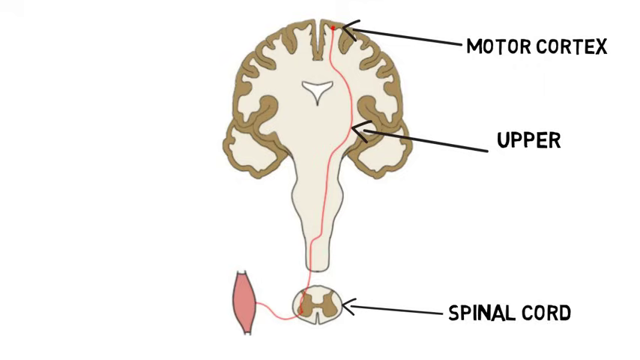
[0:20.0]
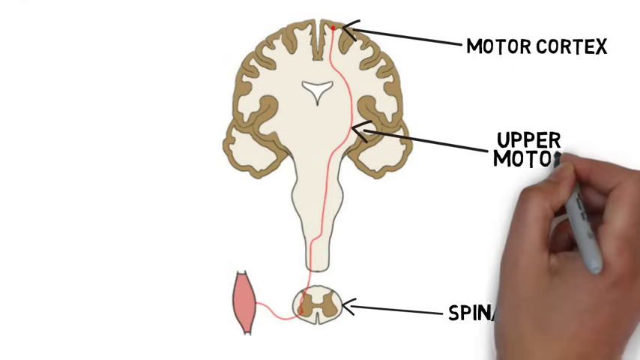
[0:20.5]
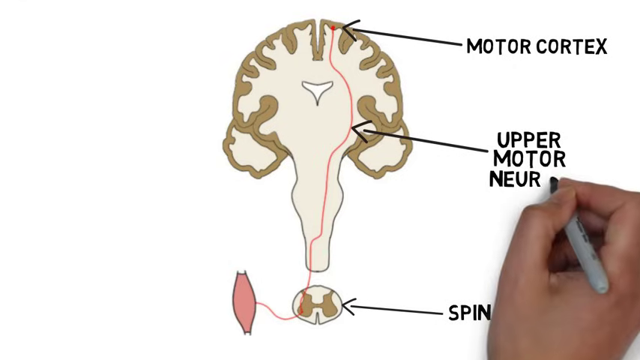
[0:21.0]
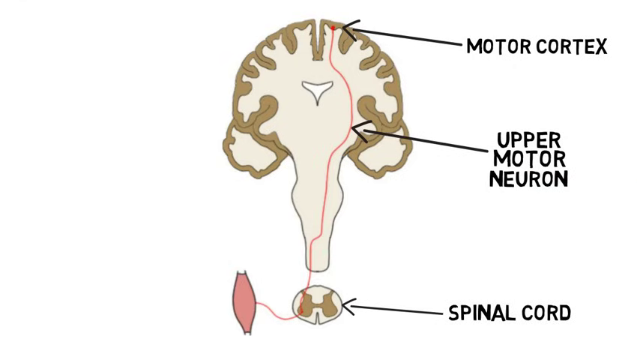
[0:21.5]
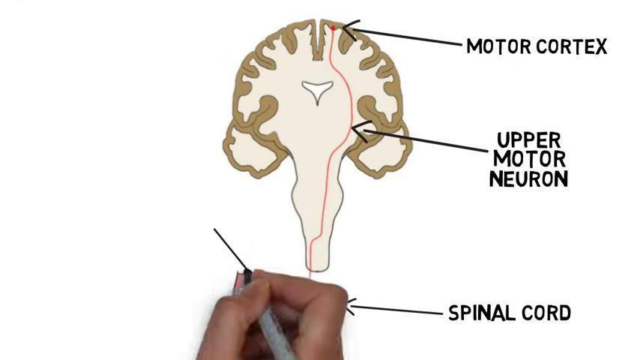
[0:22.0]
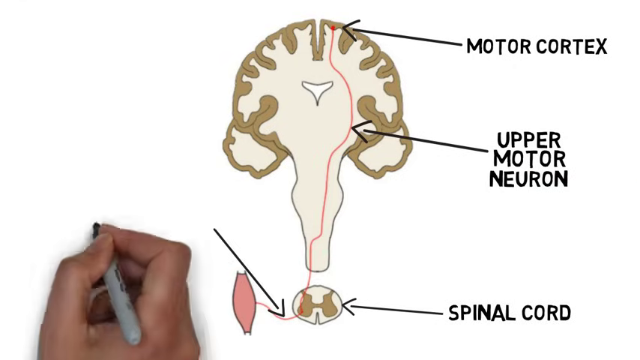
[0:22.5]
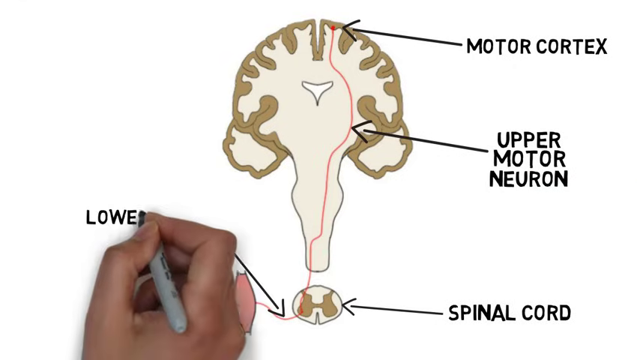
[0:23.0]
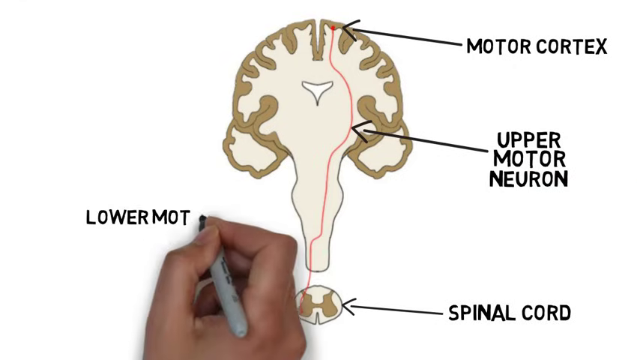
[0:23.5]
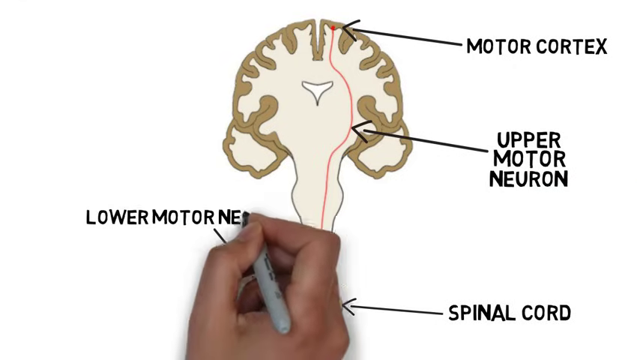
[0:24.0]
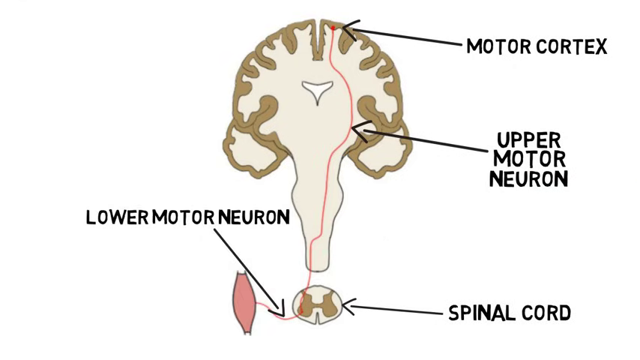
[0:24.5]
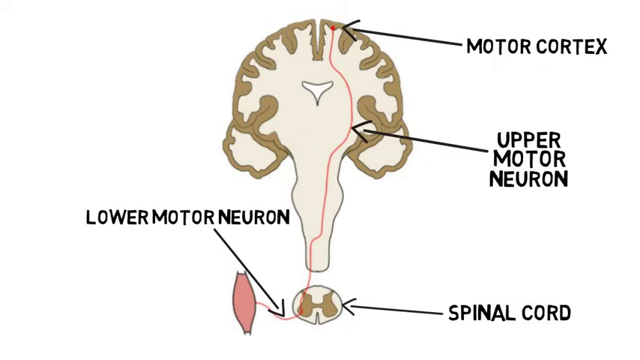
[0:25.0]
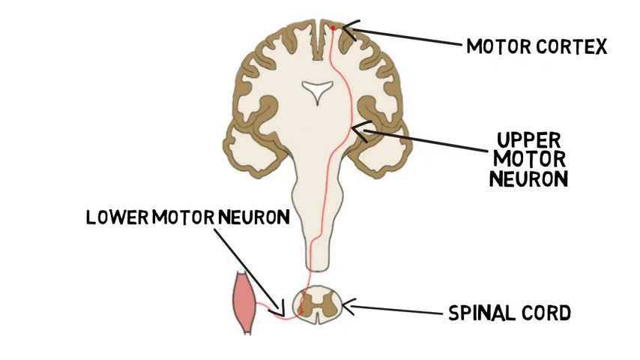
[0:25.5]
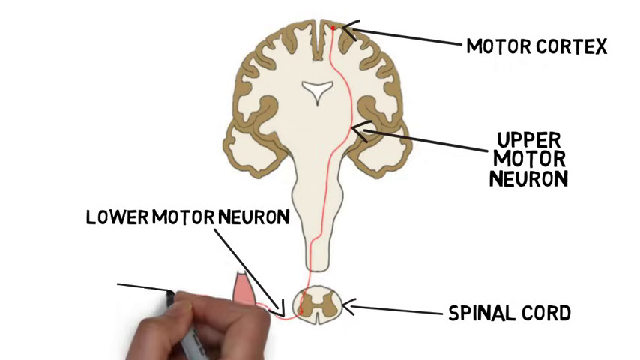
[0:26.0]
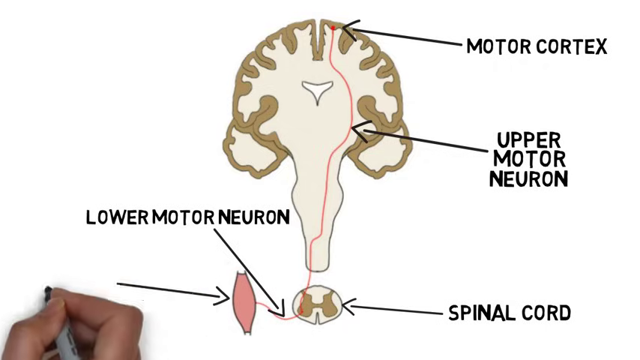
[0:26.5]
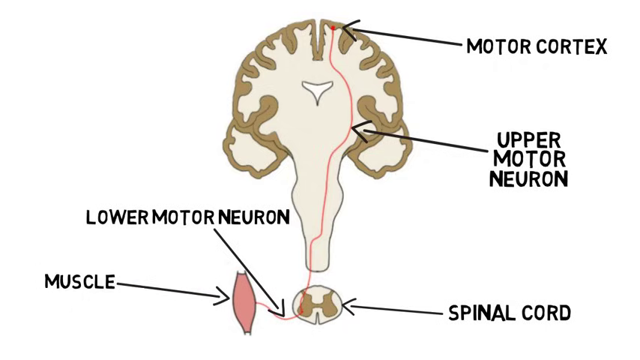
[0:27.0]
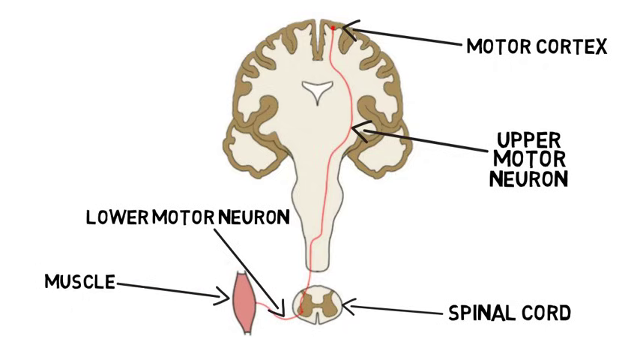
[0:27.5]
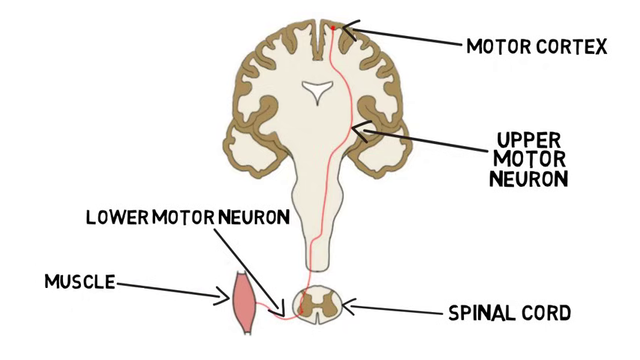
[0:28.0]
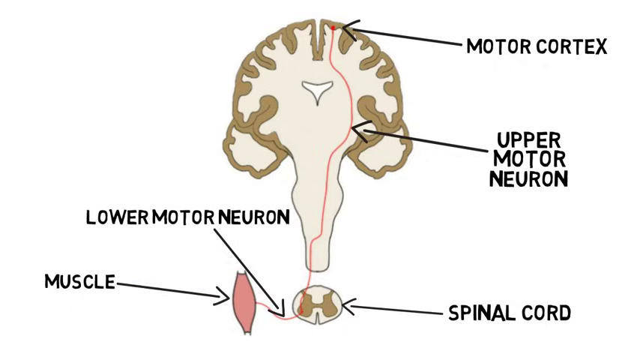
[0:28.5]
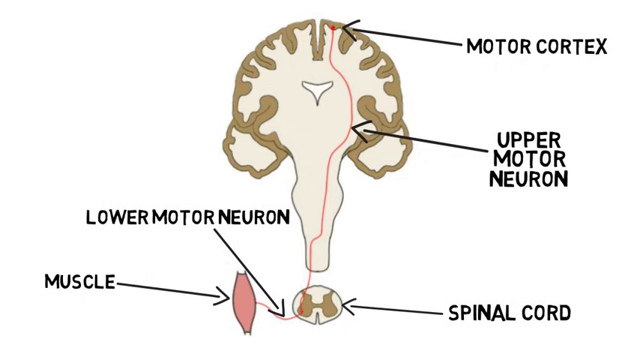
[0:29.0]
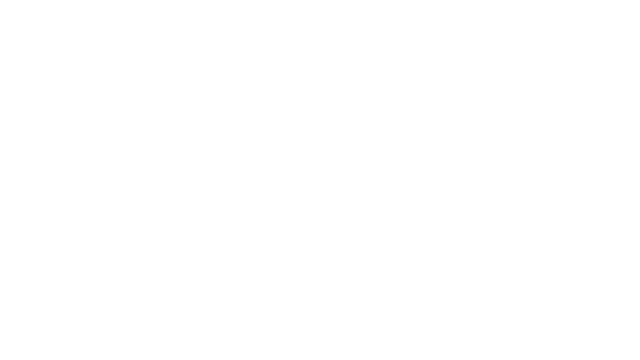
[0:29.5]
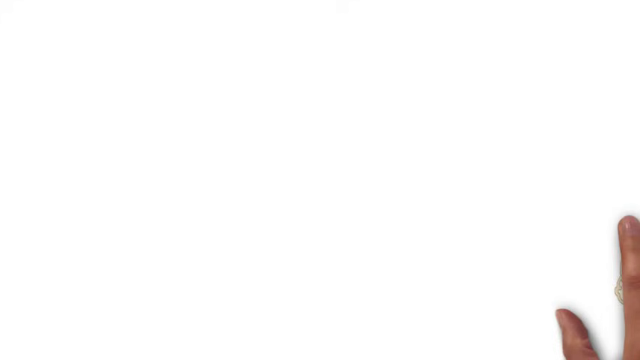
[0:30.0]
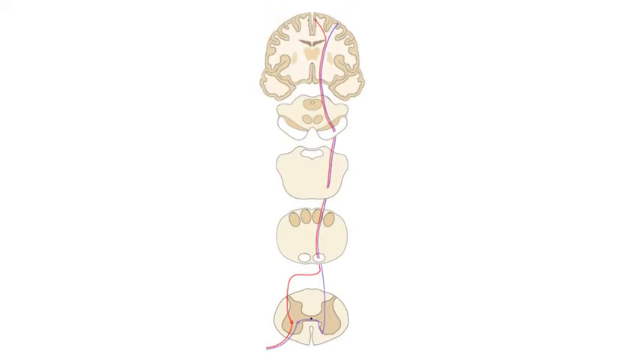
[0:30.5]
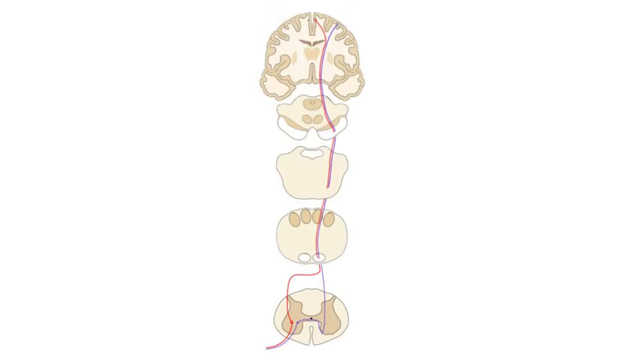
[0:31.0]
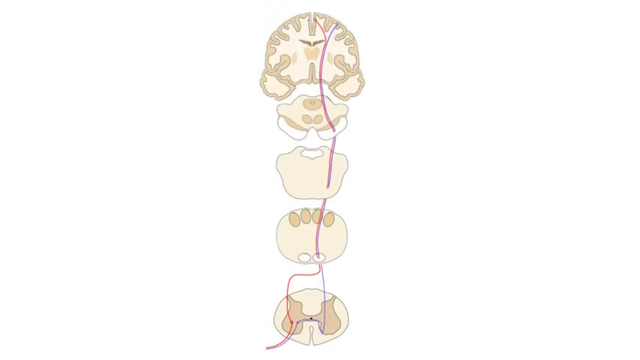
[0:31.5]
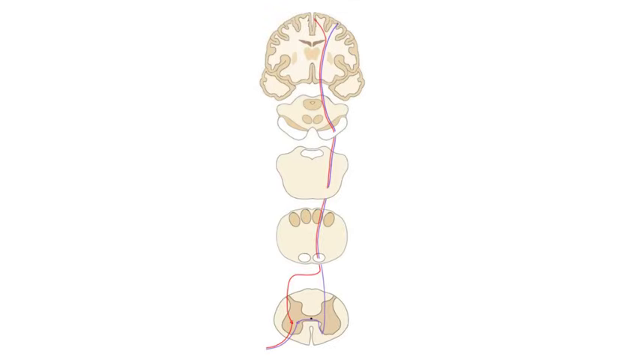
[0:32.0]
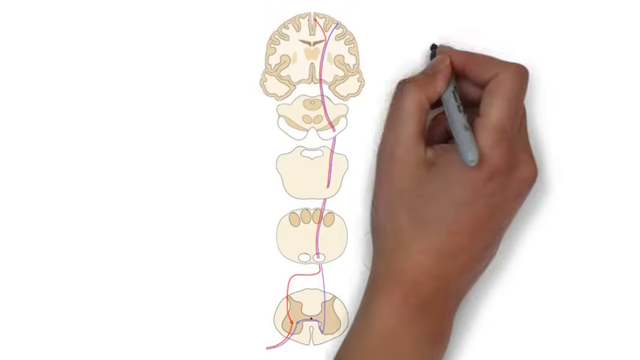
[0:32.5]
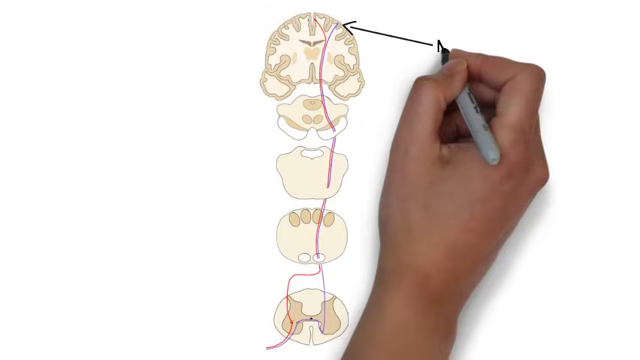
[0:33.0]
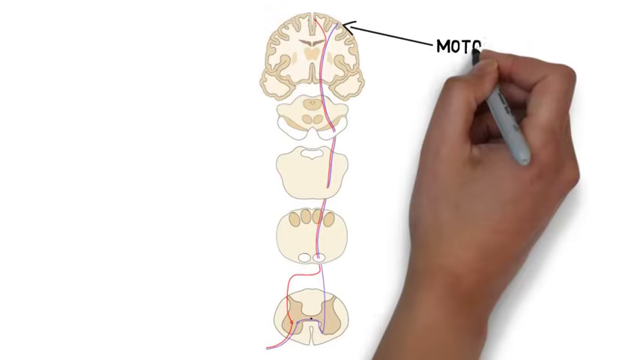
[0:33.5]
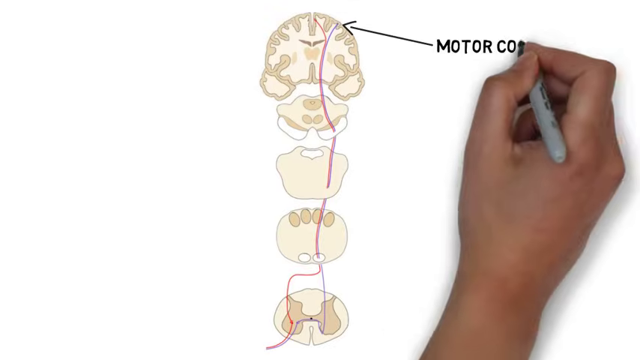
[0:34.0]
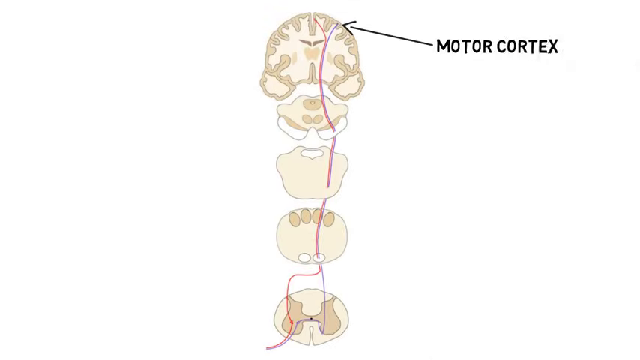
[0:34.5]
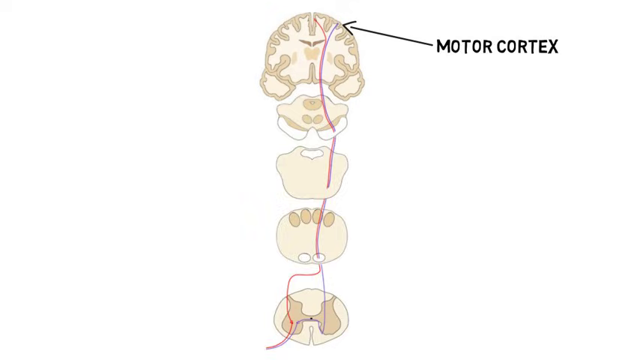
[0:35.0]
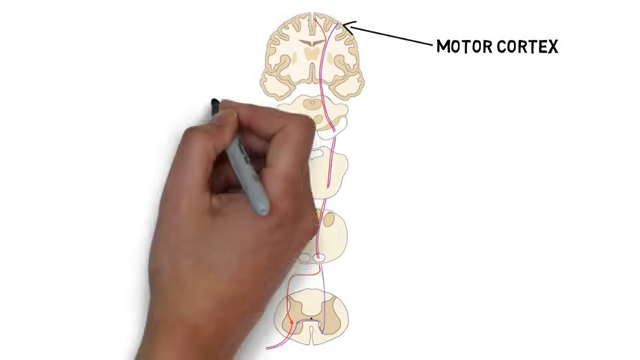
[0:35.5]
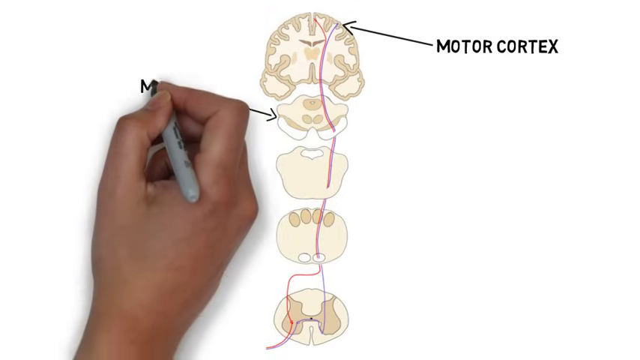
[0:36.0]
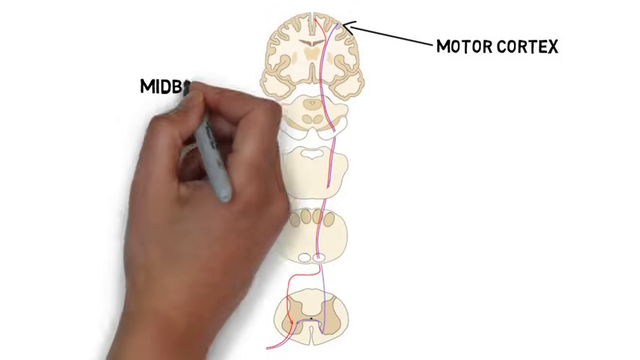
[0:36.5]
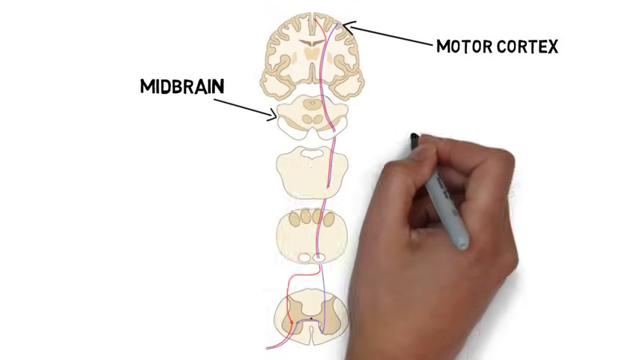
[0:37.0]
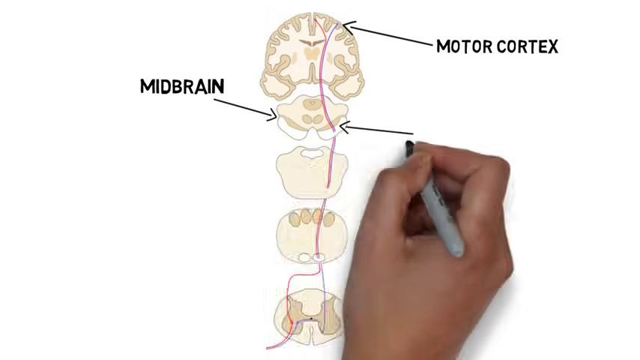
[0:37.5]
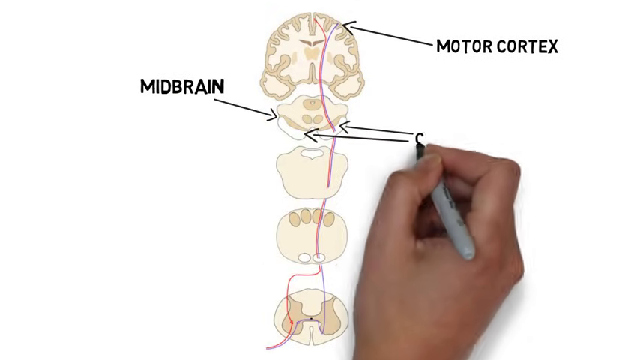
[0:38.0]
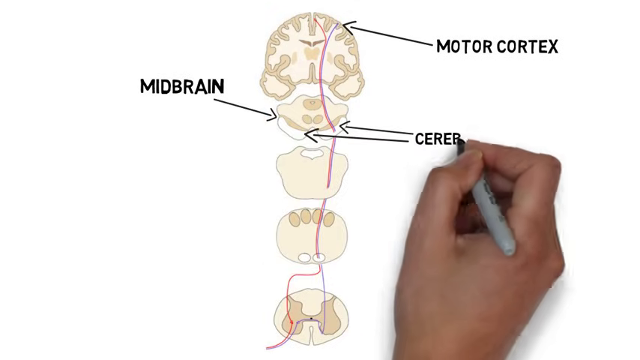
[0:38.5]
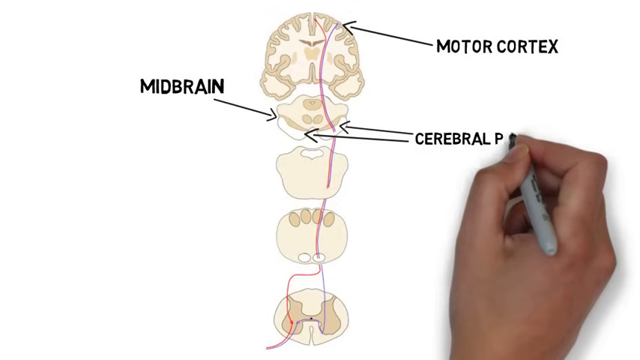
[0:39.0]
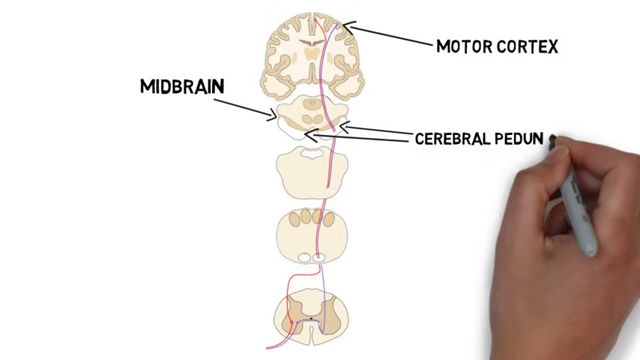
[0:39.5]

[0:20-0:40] The hand, in the center of the screen, writes "upper motor neuron" at the end of the arrow it just drew. It moves to the left part of the diagram at the bottom, draws an arrow pointing down near the bottom, and writes "lower motor neuron" at its end. Another arrow is drawn to a piece at the bottom of the diagram, labeled "muscle". The fully labeled diagram then falls and flies to the left of the screen, leaving it white, and the hand brings in another diagram. It draws an arrow pointing to the top of this diagram and writes "motor cortex". Moving to the left, it points to another area and writes "midbrain" at the end of the arrow. Two more arrows on the right side point at another area and are labeled "cerebral peduncles".